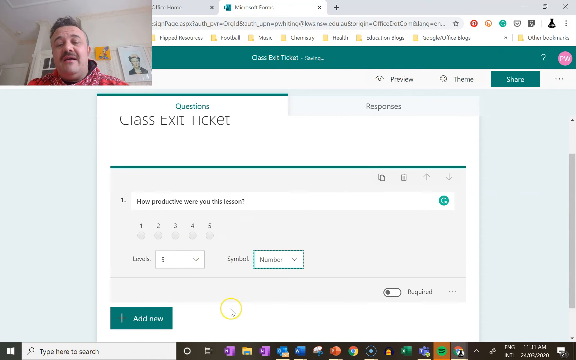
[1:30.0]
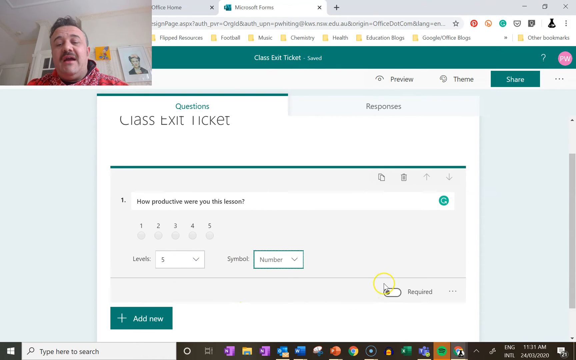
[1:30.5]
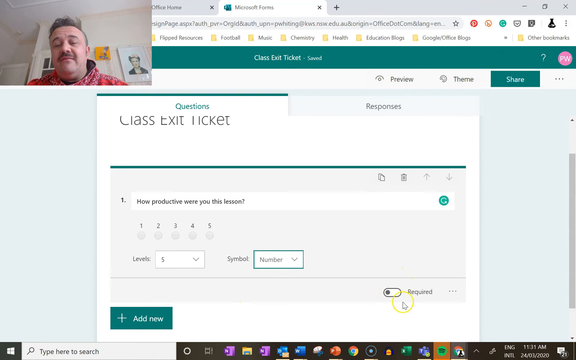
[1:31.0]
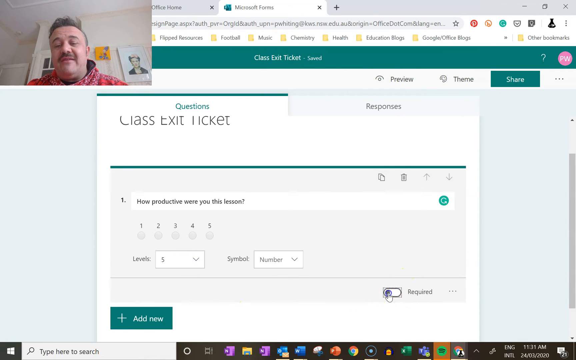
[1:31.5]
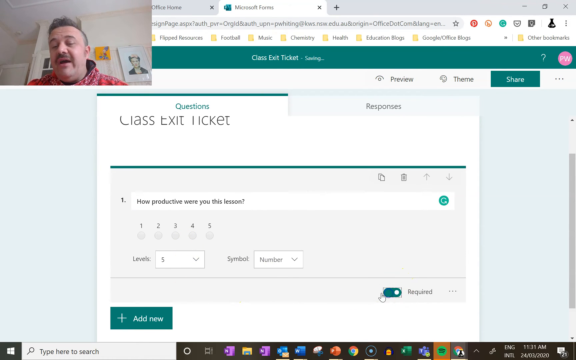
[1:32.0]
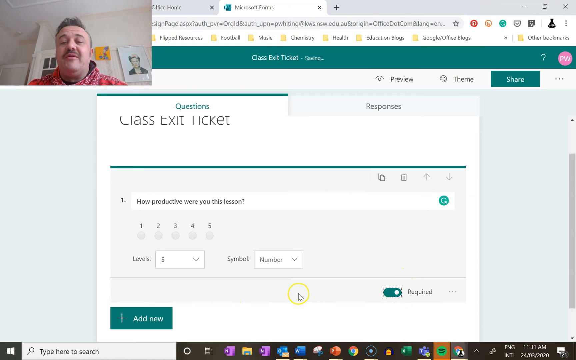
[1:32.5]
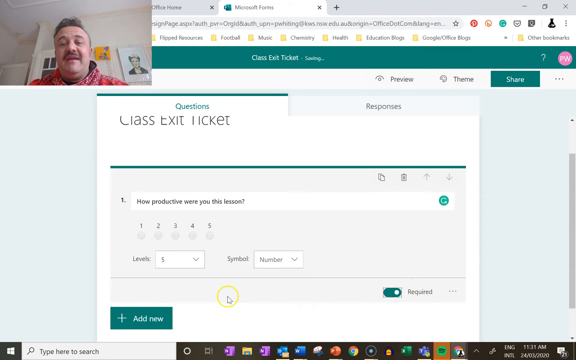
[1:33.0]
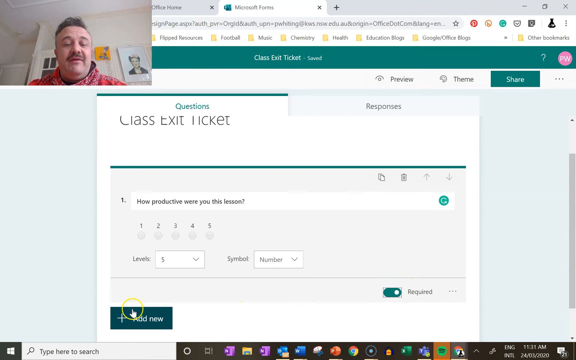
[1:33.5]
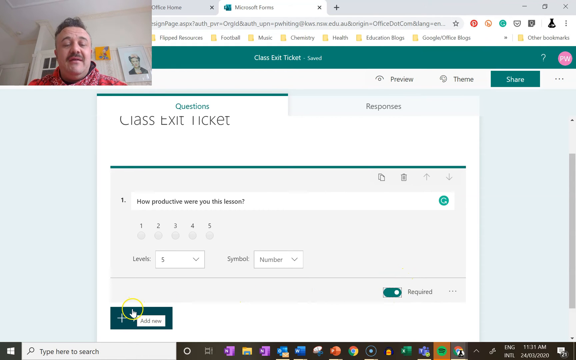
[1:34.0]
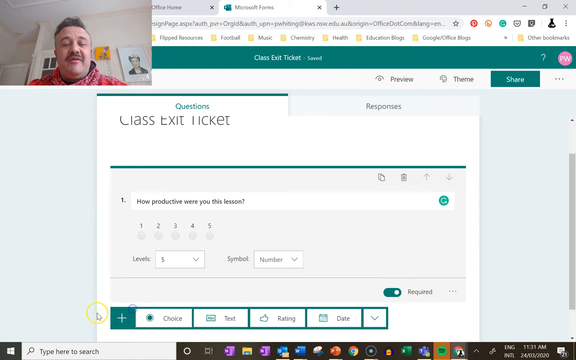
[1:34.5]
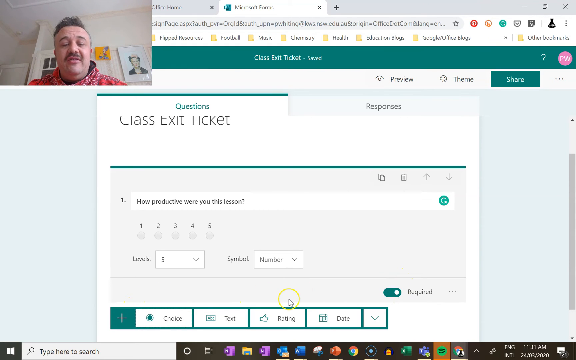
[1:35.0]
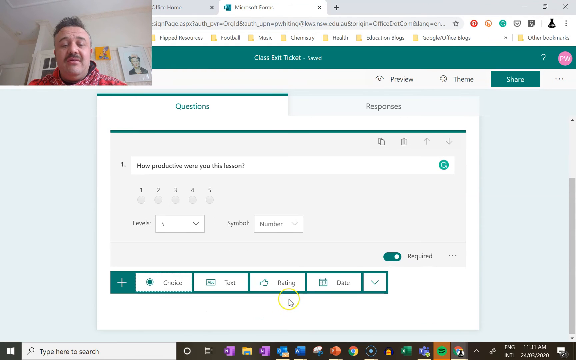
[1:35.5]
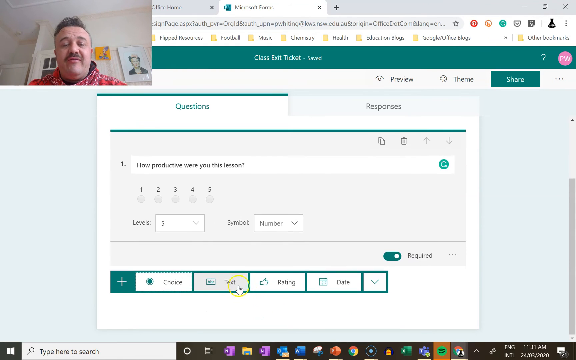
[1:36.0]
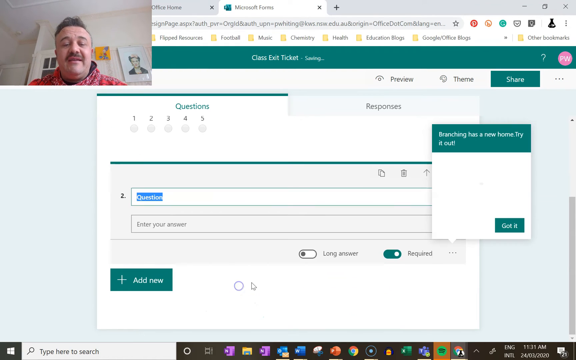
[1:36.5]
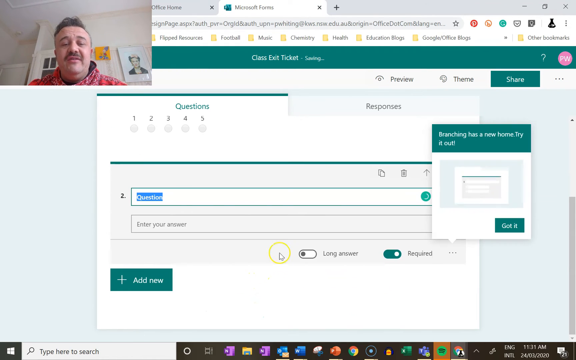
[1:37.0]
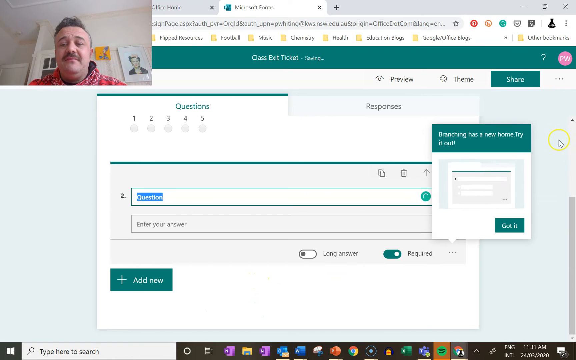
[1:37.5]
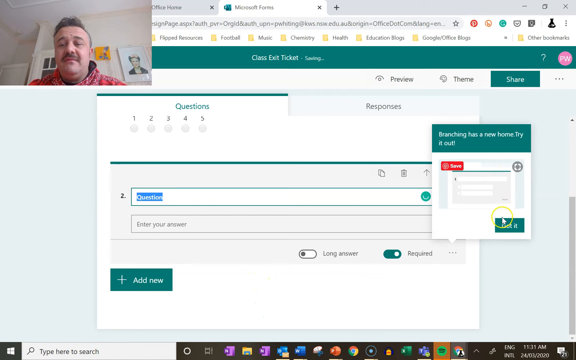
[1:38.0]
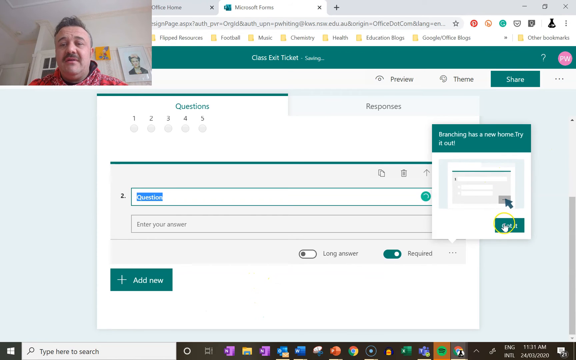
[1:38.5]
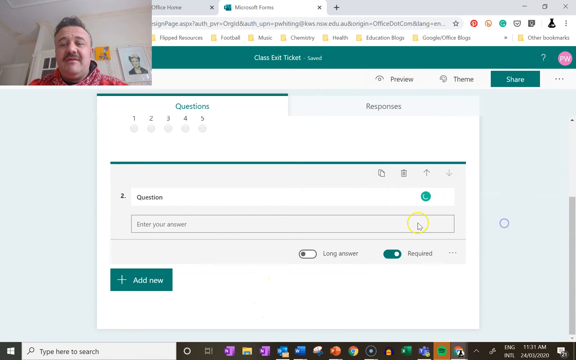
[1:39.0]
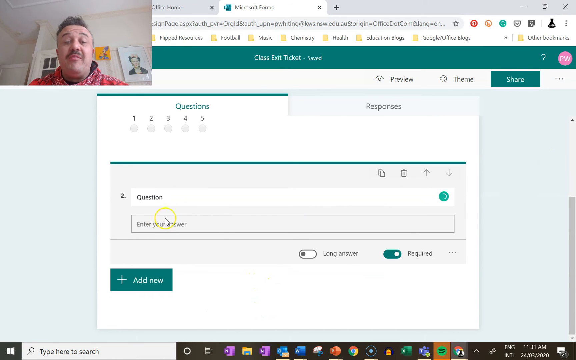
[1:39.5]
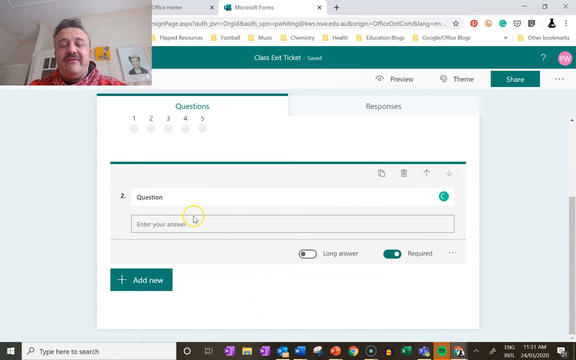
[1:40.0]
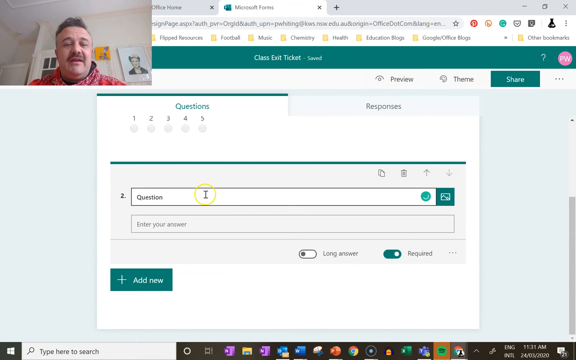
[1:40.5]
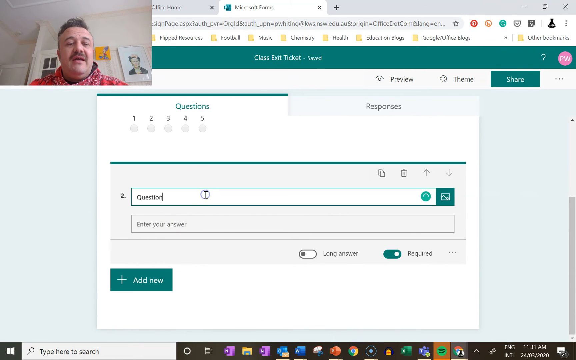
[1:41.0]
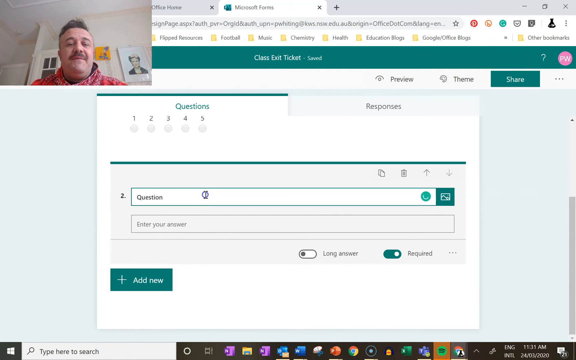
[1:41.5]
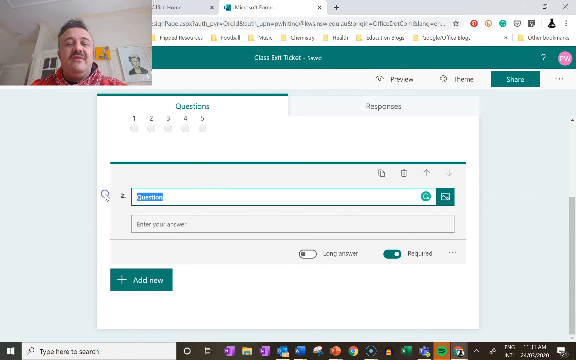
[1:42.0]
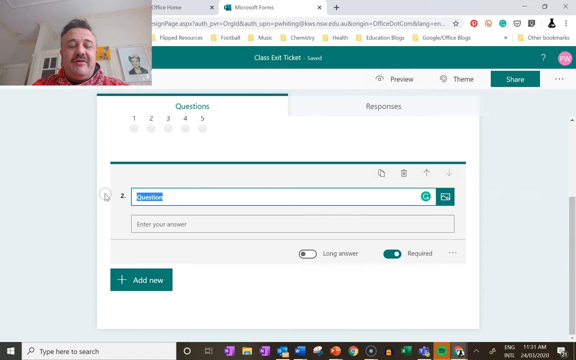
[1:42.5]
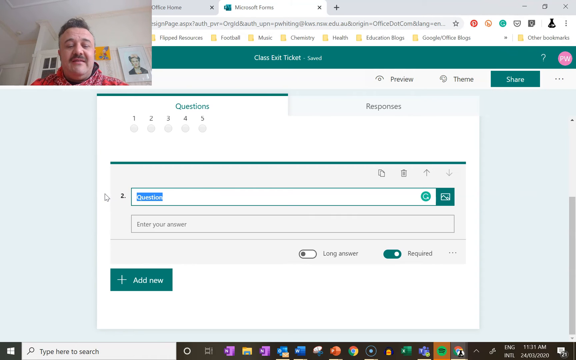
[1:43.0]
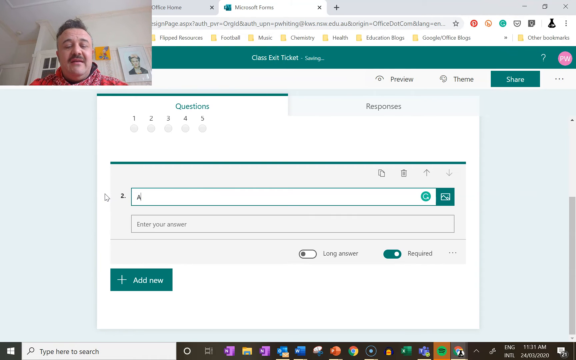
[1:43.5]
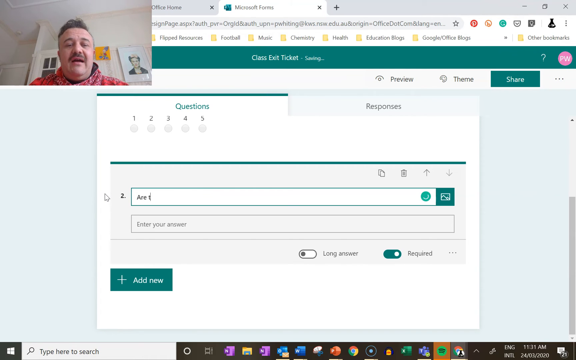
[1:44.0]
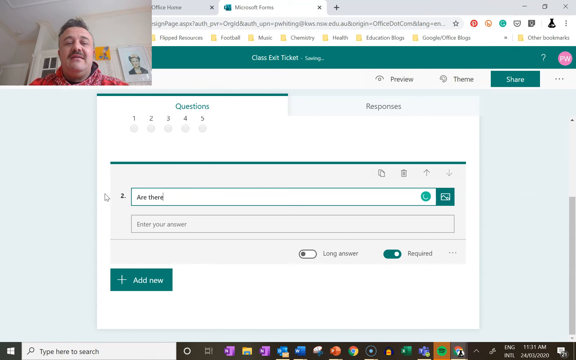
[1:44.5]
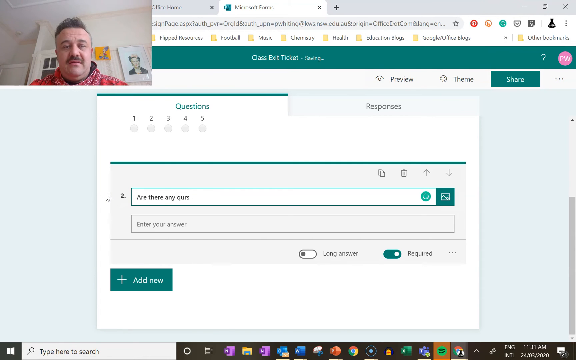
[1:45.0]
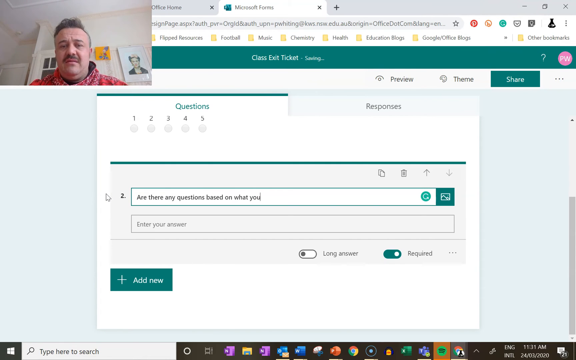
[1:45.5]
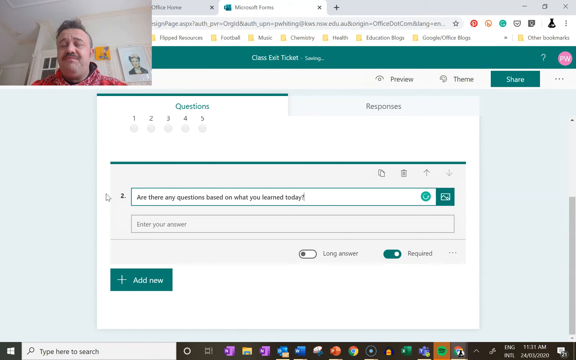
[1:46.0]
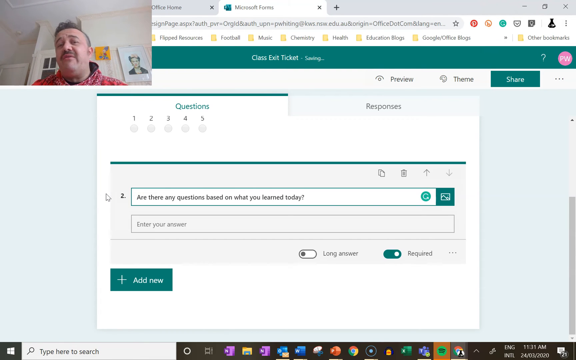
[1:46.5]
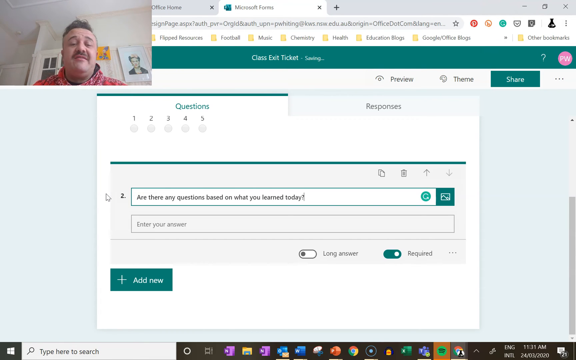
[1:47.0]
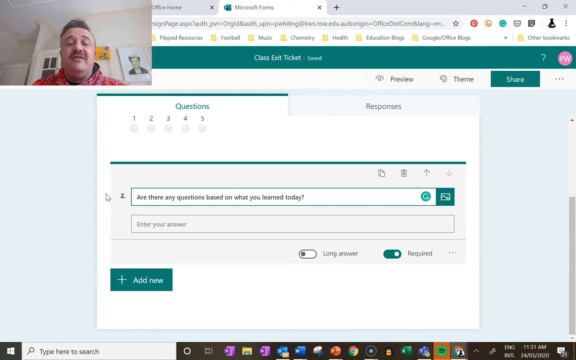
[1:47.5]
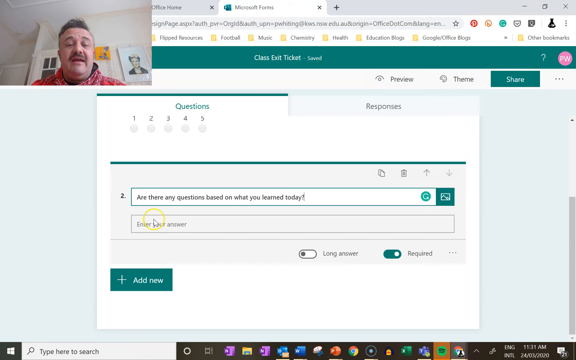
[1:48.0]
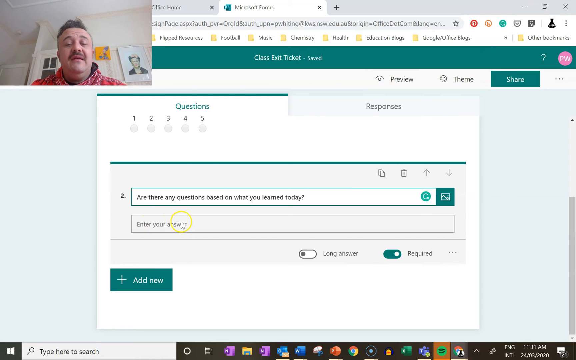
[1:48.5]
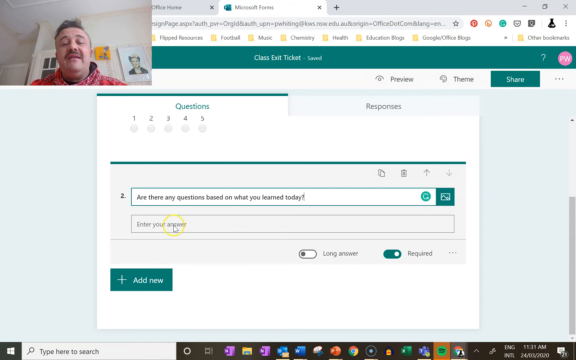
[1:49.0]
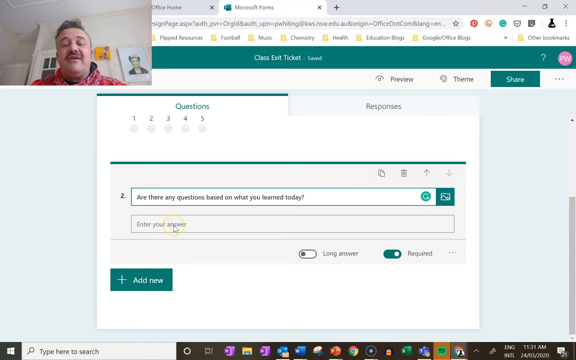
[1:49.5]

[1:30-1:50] The man working on the computer clicks a section that says "required" and moves the toggle to the on position. He then goes down and clicks to bring up a pop-up box that says "Branching has a new home try it out", with a "got it" button, which he clicks. He highlights the section that says "questions" and types "are there any questions based on what you learned today", with a lower box right under it for an answer. The vlogging man has brown hair that is kind of spiked up in the back and a brown mustache, and wears a plaid shirt that looks like a brown collar shirt. The background has beige walls and a couple of pictures to the man's right.